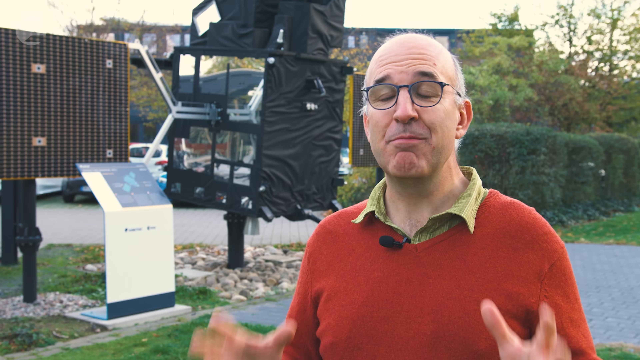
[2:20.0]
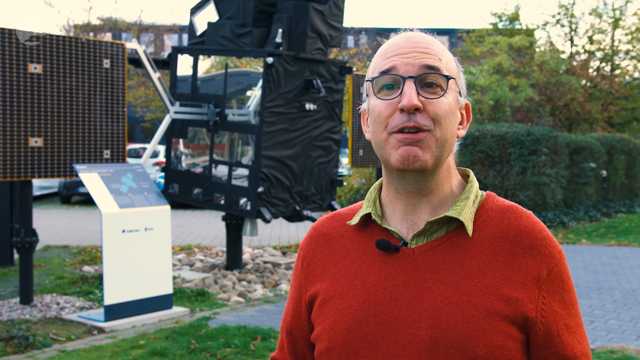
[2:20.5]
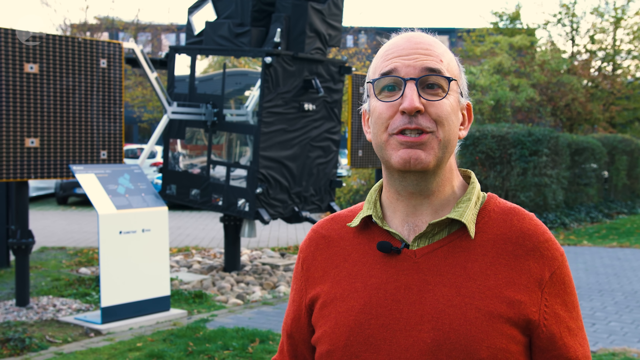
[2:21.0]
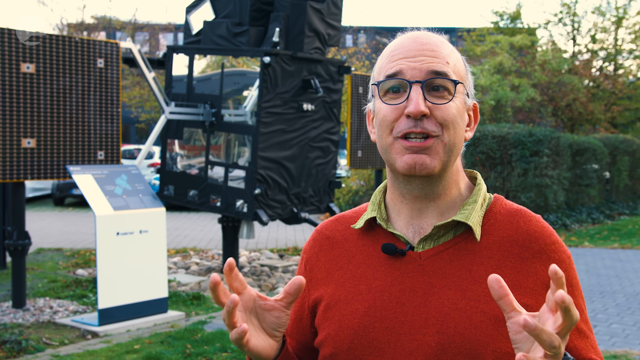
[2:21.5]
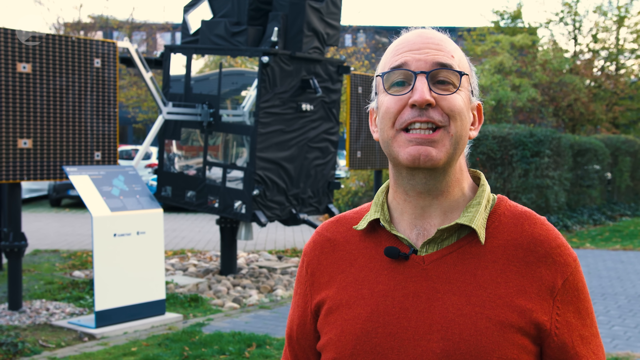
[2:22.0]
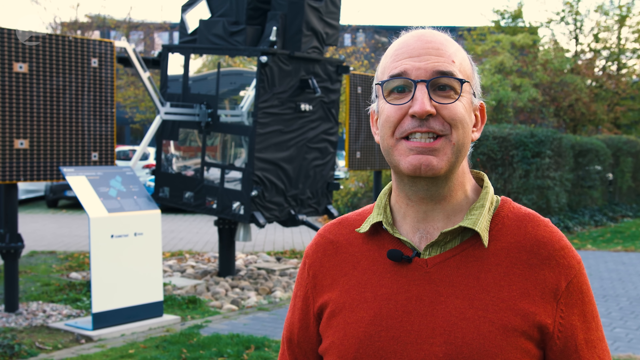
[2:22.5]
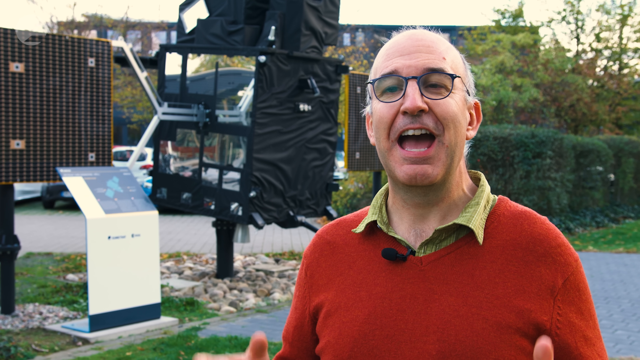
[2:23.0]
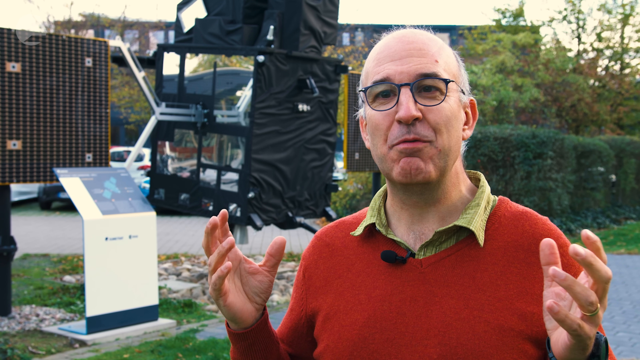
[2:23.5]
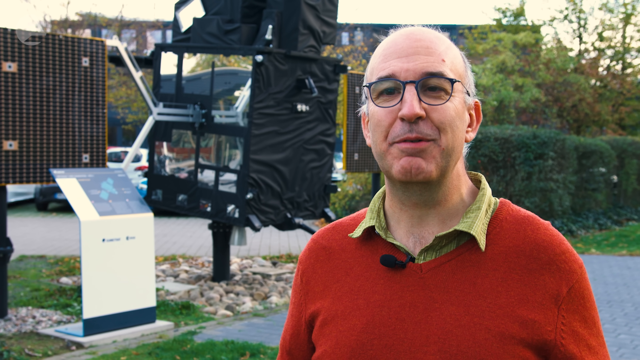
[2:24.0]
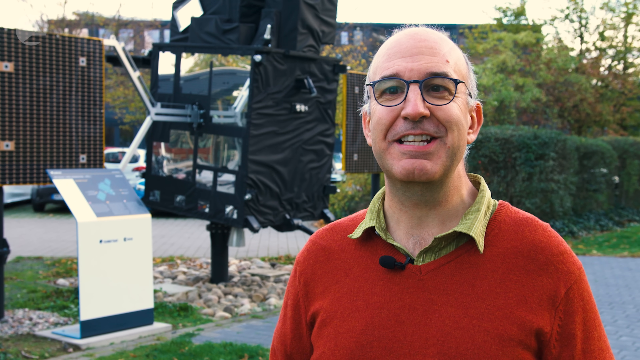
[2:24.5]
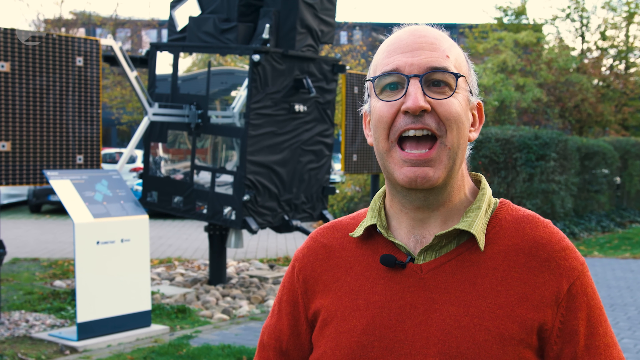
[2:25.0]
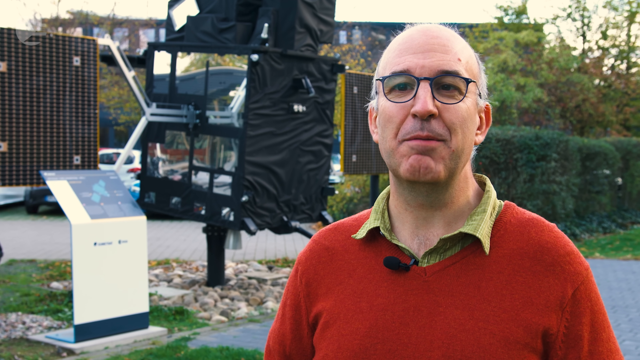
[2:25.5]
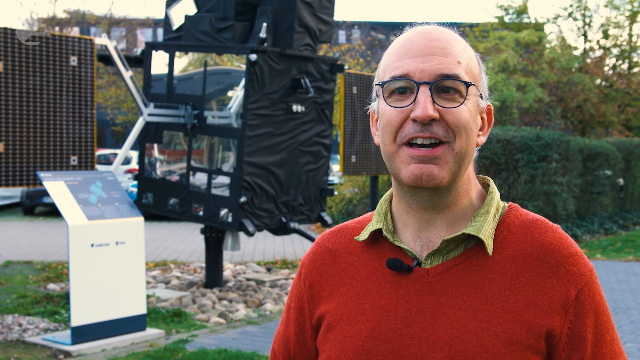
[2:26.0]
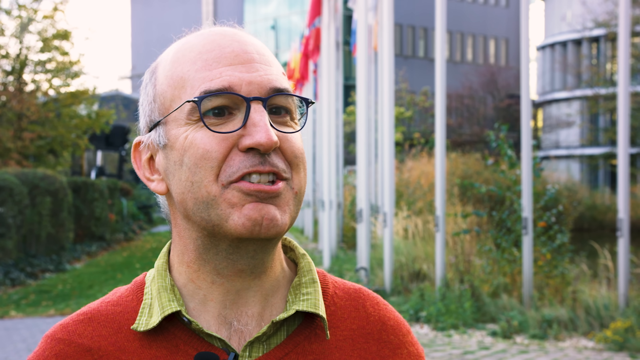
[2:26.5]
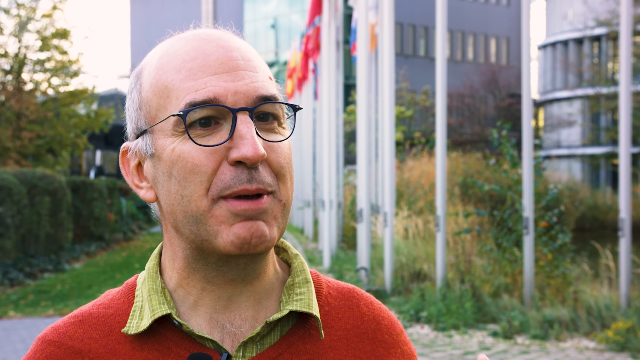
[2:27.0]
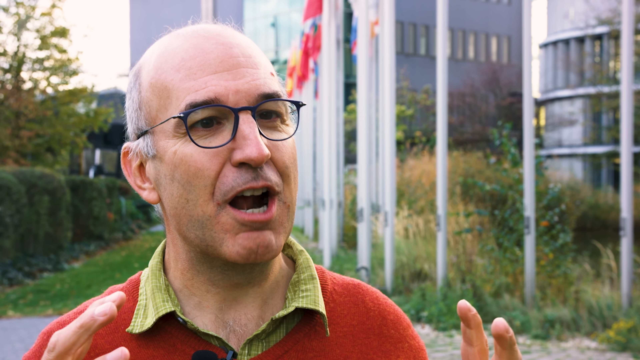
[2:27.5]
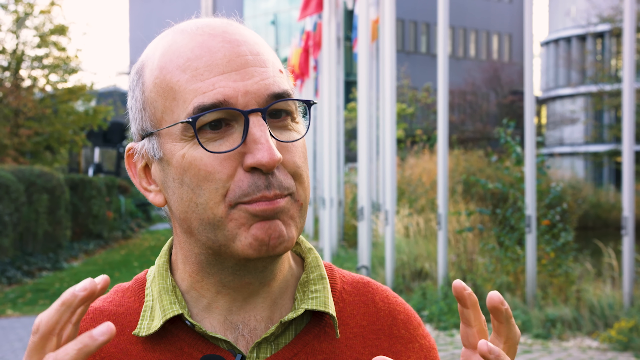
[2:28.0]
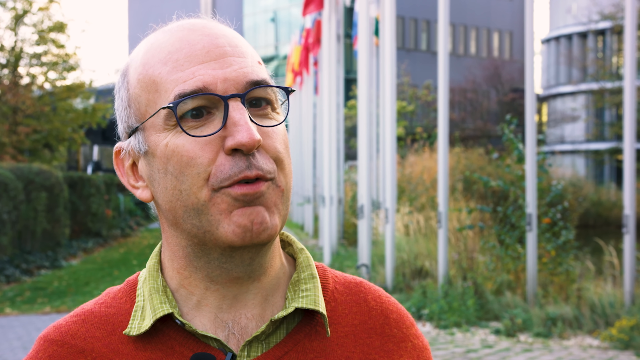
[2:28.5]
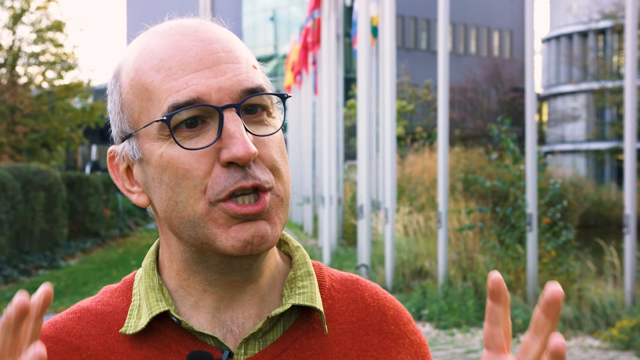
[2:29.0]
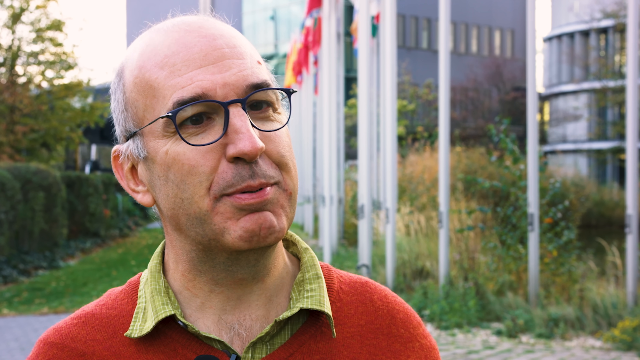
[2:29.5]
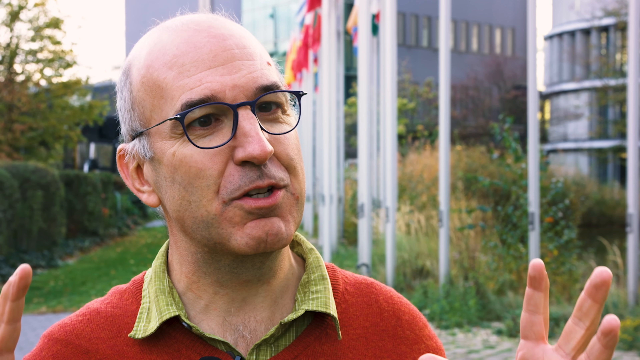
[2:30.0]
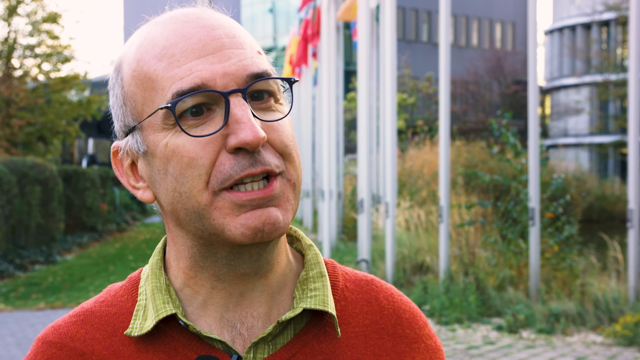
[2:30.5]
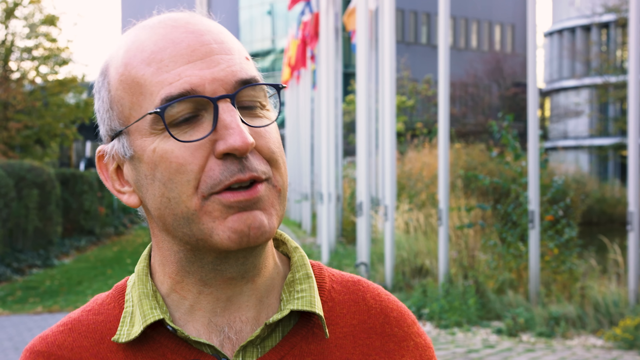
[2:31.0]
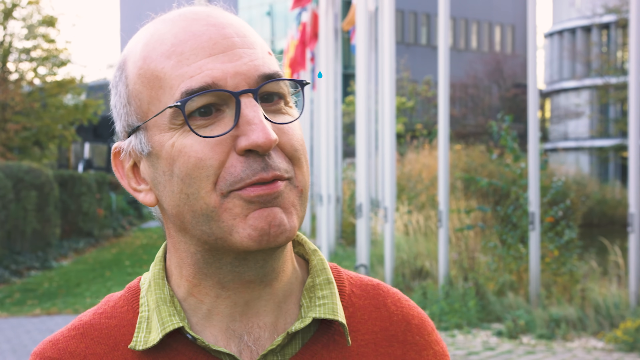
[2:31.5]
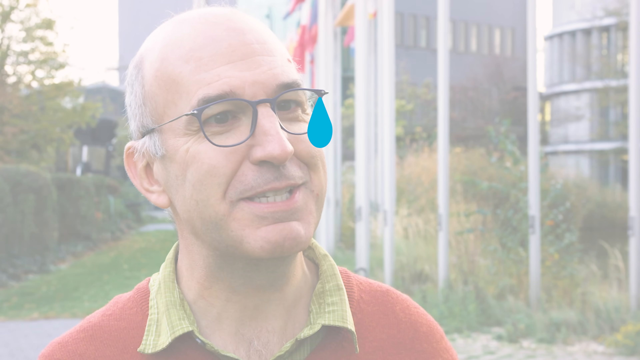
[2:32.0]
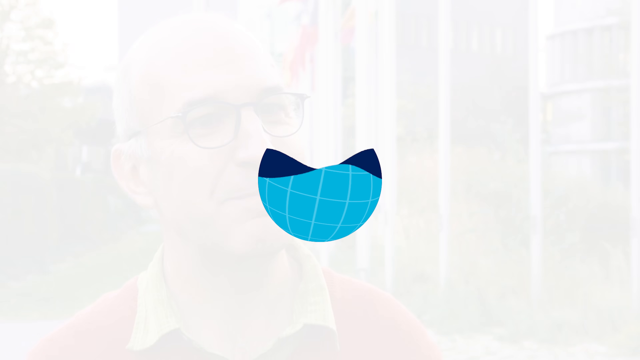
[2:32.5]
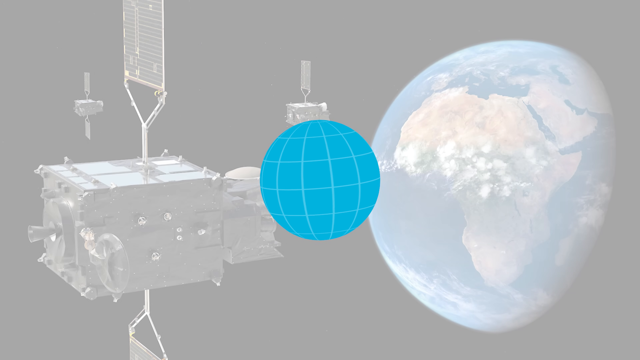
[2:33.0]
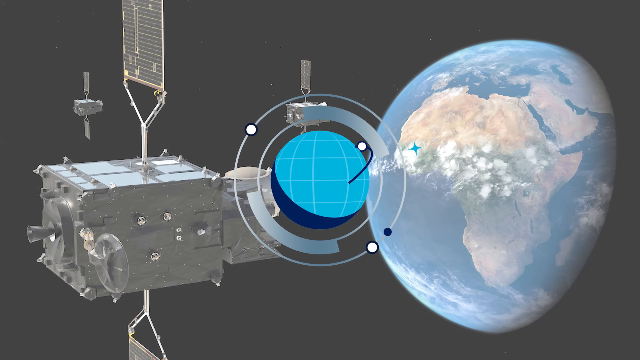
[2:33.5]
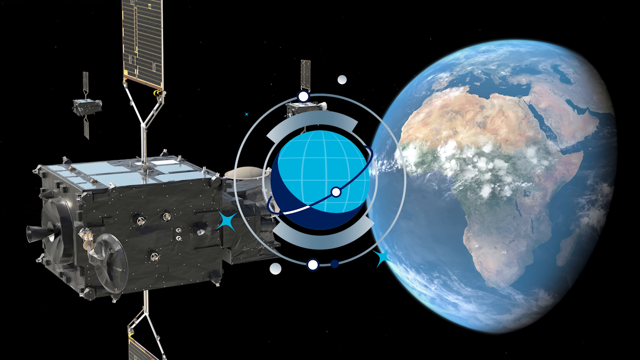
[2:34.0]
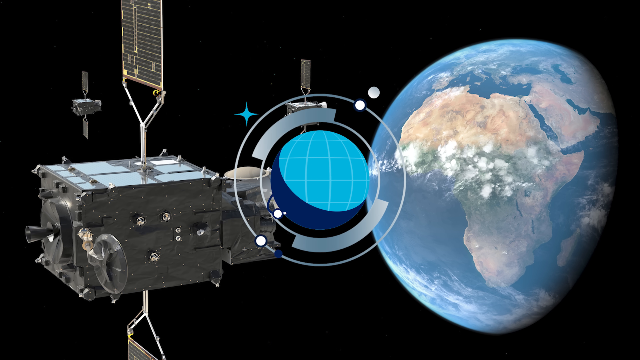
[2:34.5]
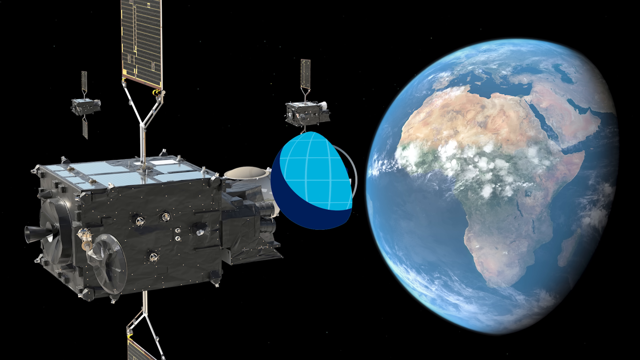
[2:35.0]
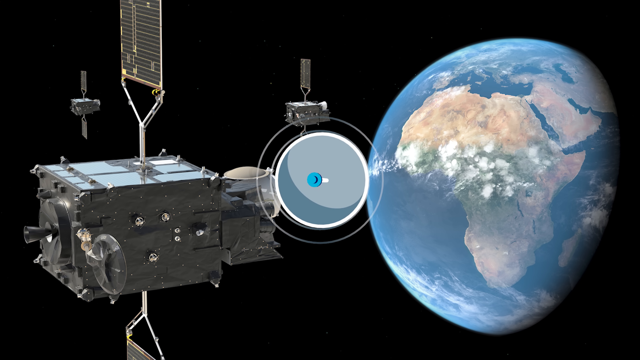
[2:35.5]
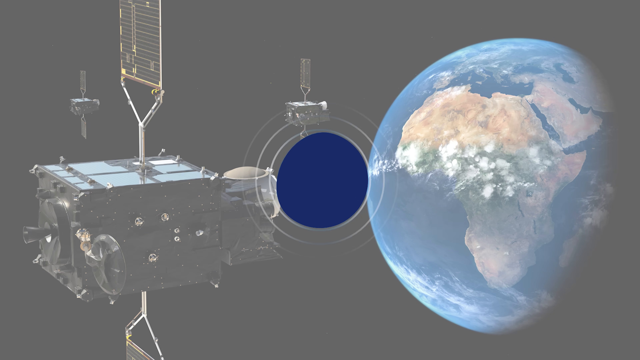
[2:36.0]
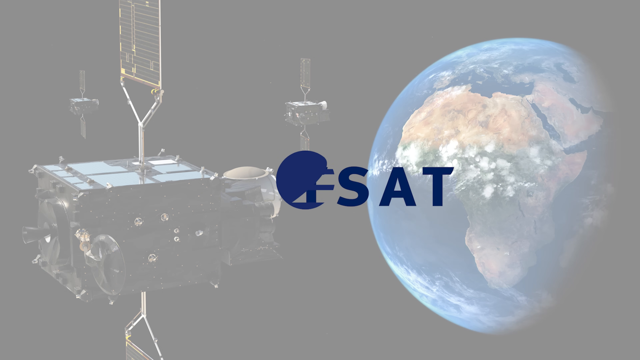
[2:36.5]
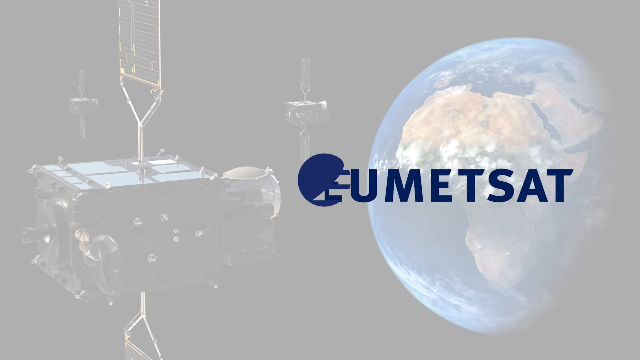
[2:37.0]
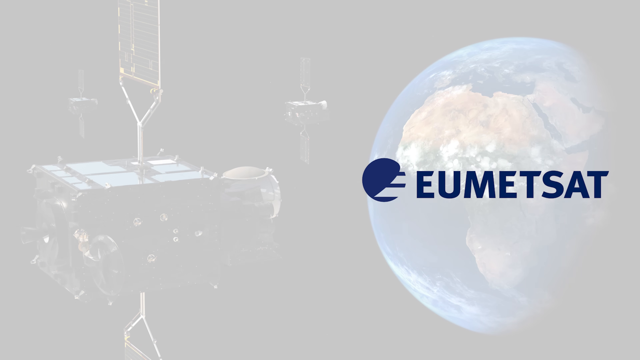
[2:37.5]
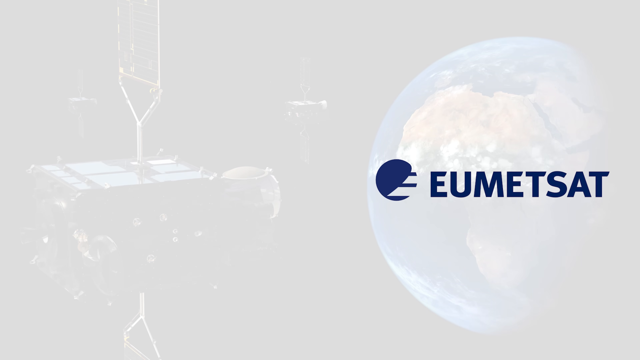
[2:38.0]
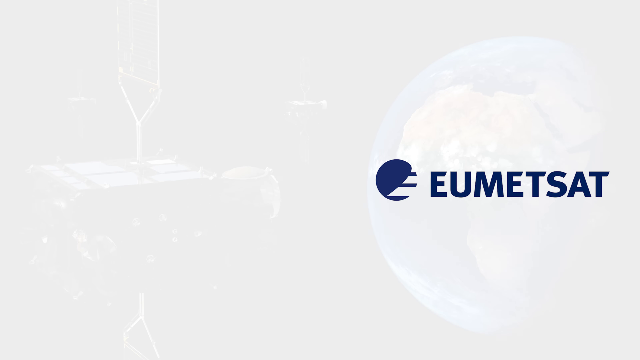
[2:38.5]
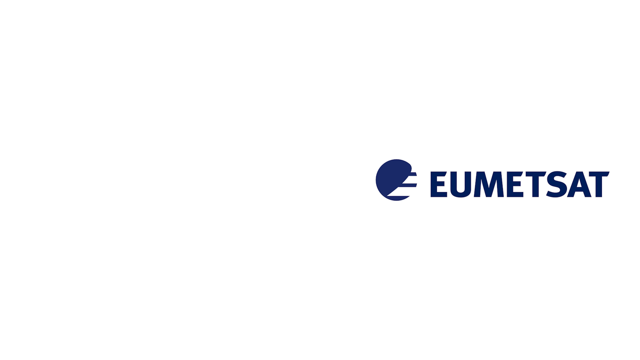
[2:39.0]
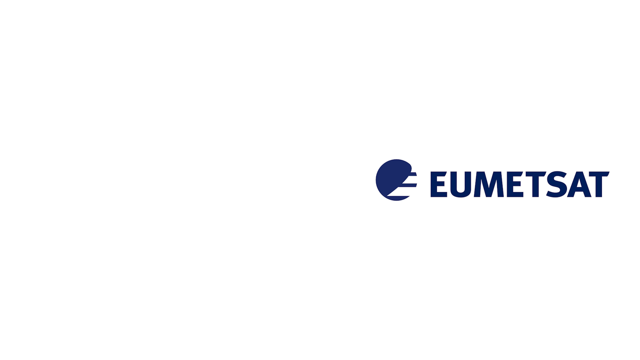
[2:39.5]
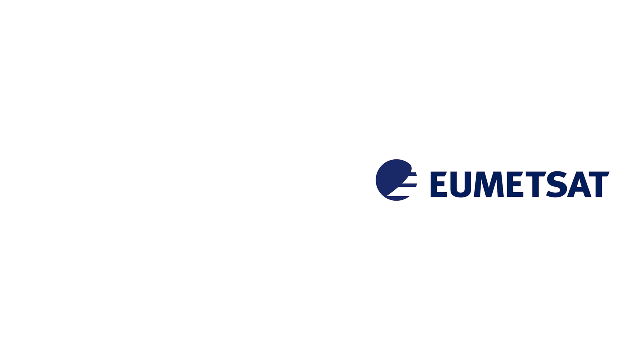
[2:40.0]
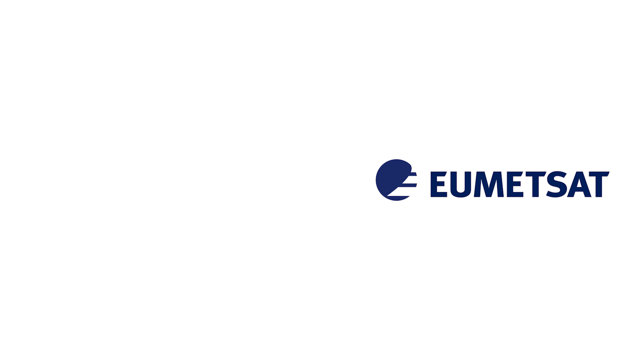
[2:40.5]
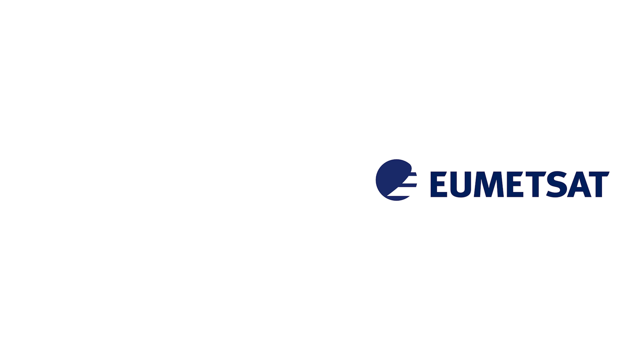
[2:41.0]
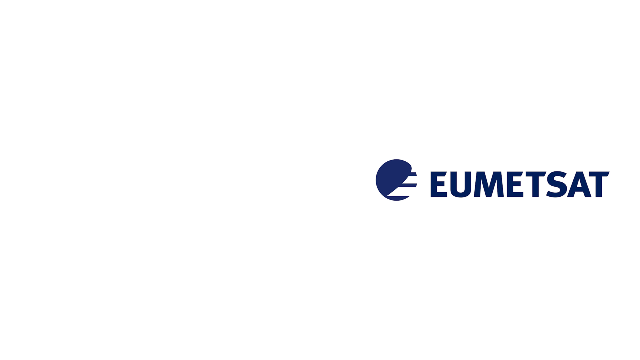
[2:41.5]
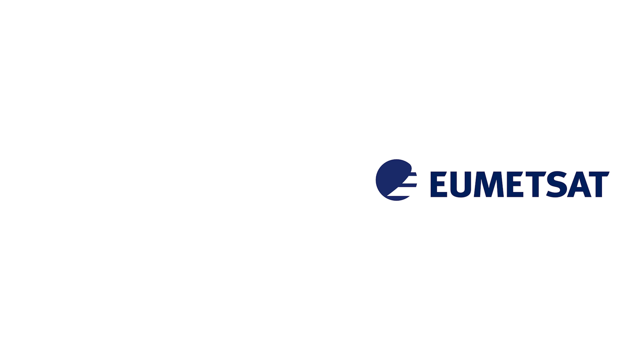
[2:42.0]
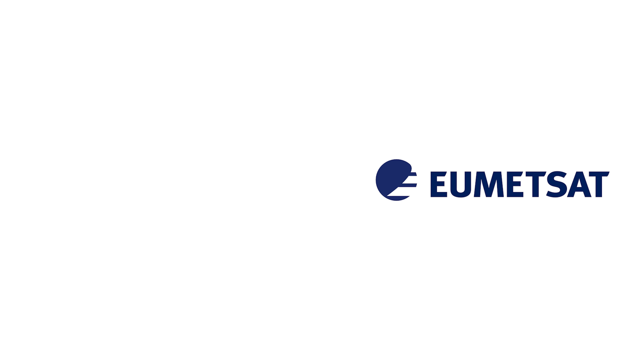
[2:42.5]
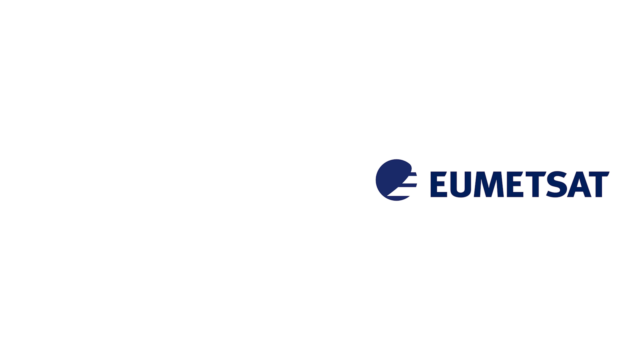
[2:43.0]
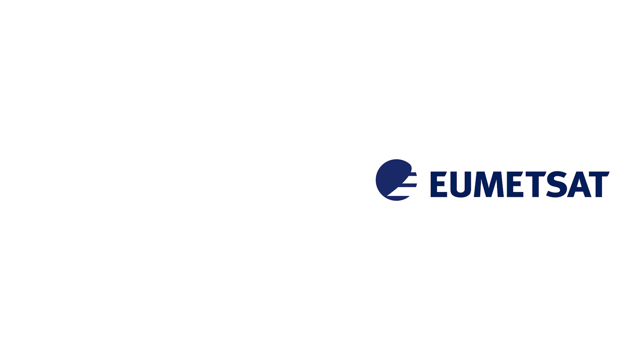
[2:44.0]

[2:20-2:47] A man in a green collared shirt, a red sweater vest and glasses talks to the camera, standing outside near what appears to be a parking lot, with some kind of satellite or large object covered in black fabric next to him. The view switches to him in front of a building with some flags. A generated image shows the satellite pointed toward the Earth, with Africa in view. A logo appears from a drop of water in the middle of the screen, reading "EUMETSAT", then moves to the right, and everything fades to white, apparently ending the video.